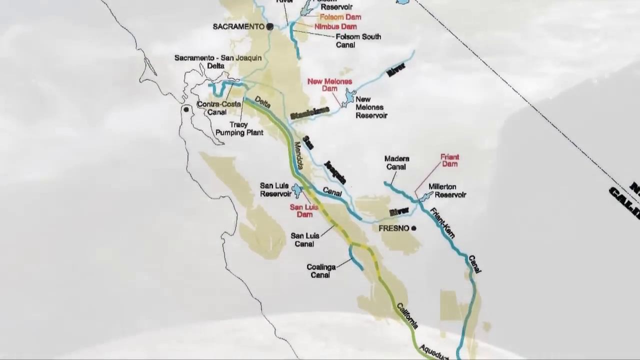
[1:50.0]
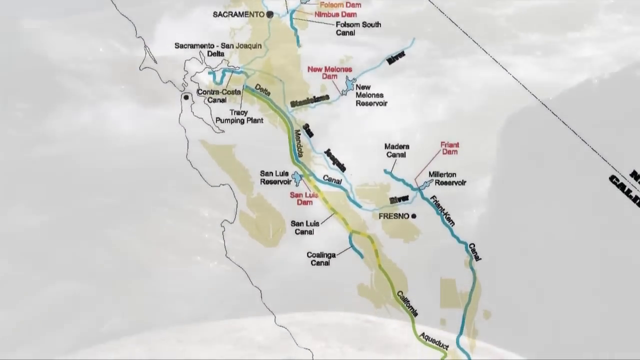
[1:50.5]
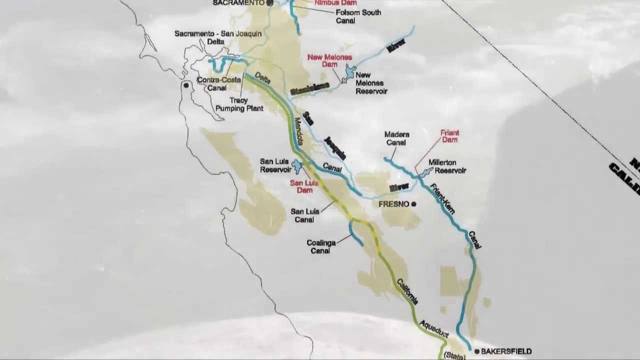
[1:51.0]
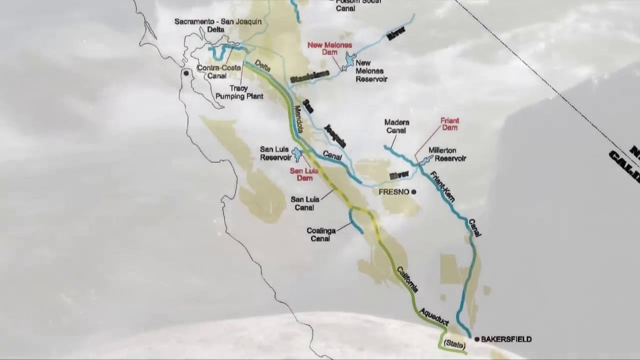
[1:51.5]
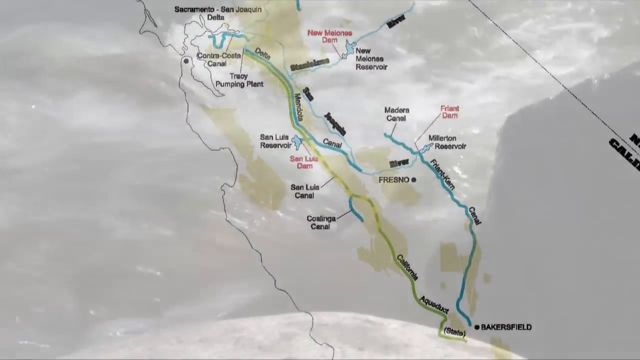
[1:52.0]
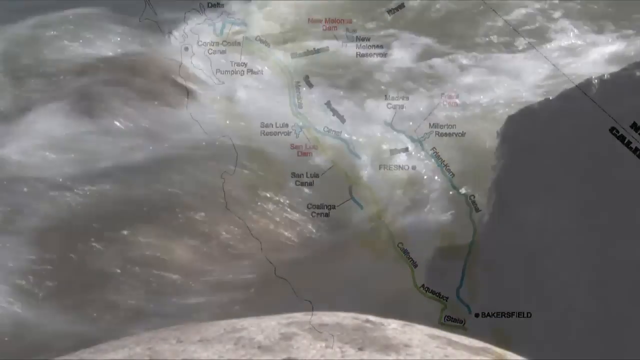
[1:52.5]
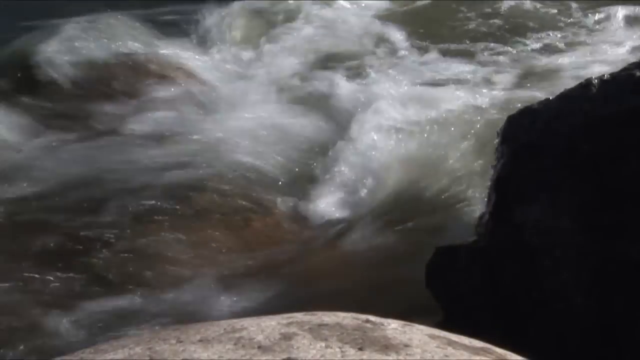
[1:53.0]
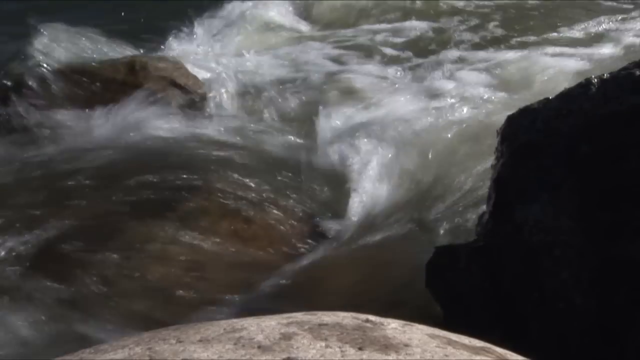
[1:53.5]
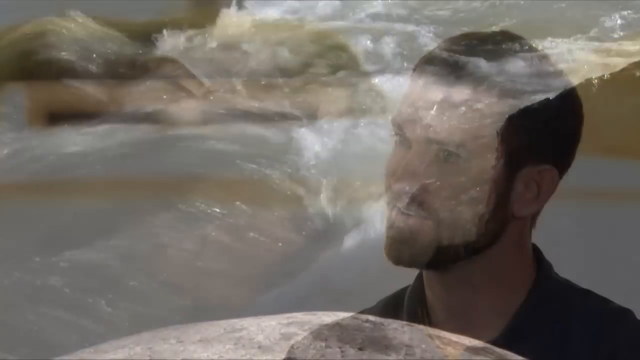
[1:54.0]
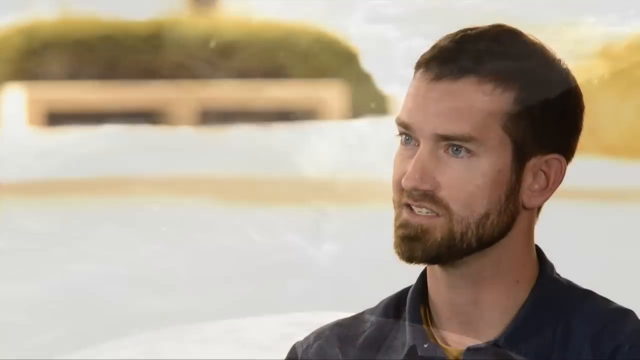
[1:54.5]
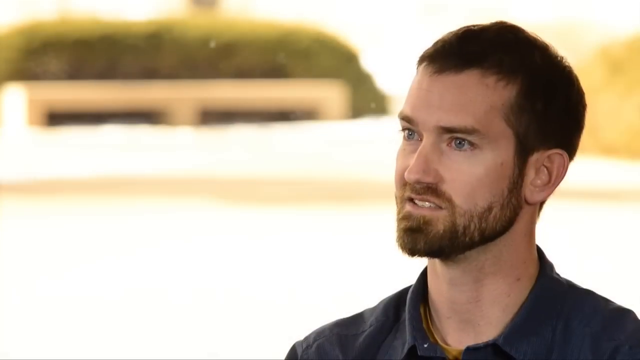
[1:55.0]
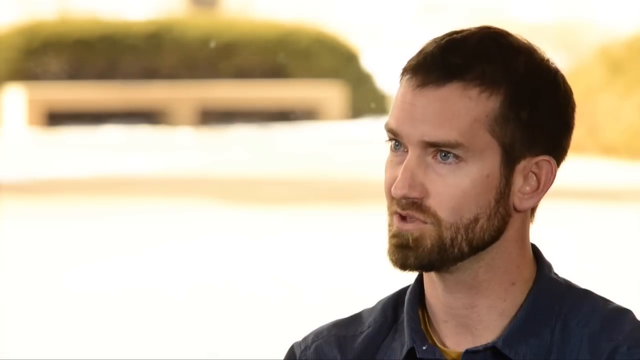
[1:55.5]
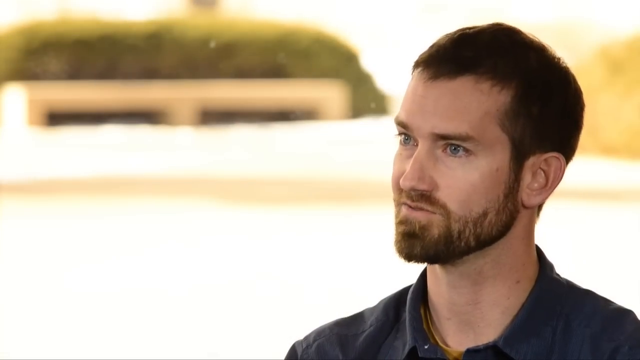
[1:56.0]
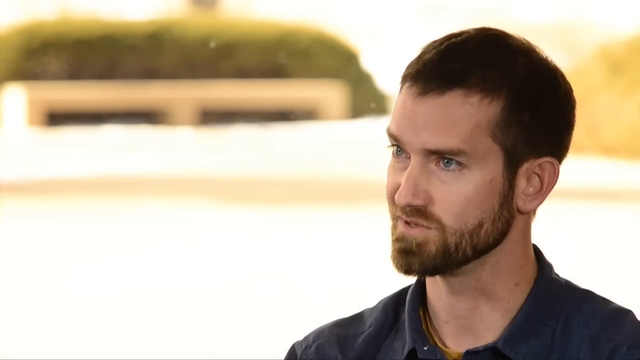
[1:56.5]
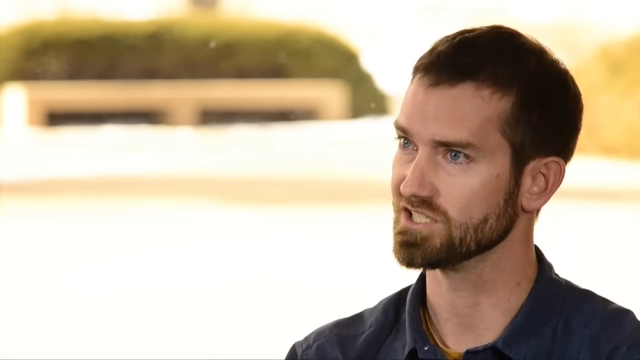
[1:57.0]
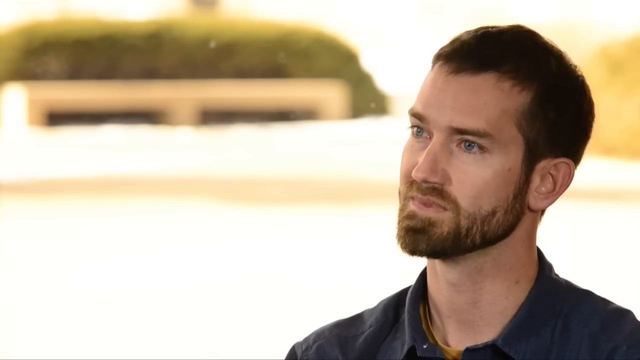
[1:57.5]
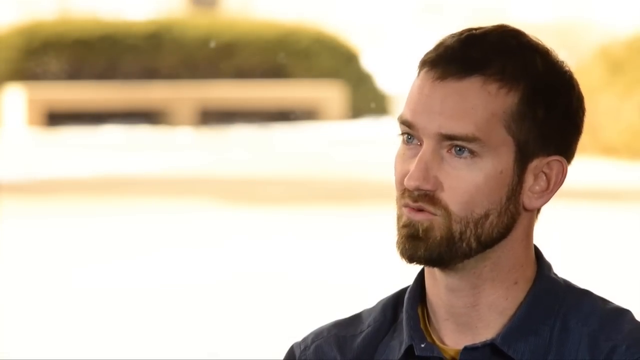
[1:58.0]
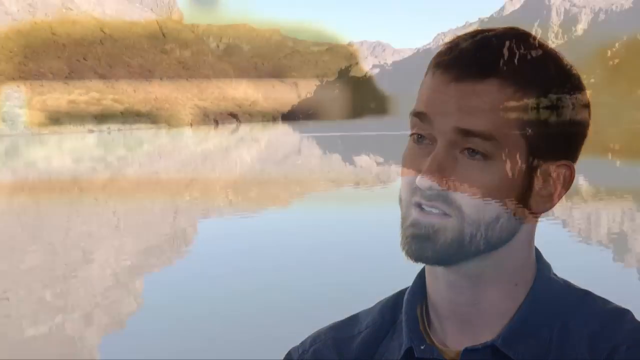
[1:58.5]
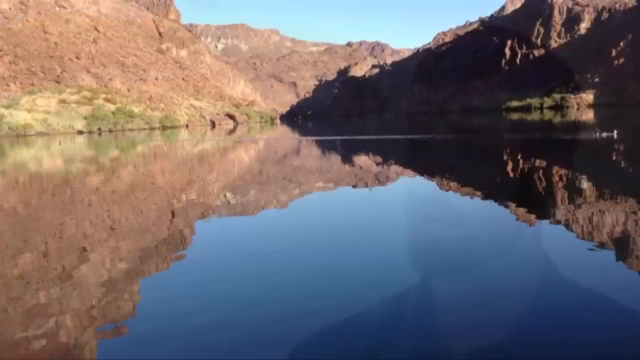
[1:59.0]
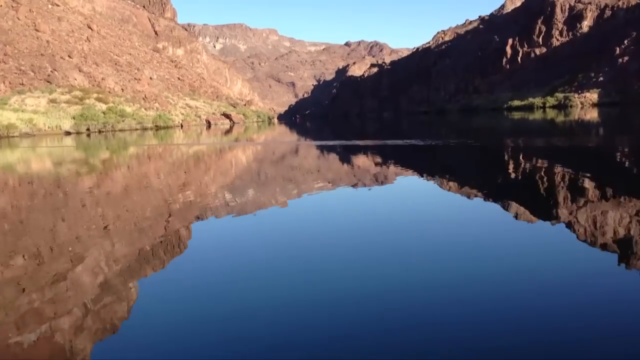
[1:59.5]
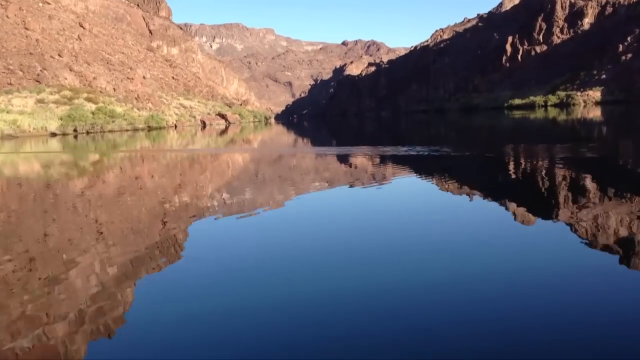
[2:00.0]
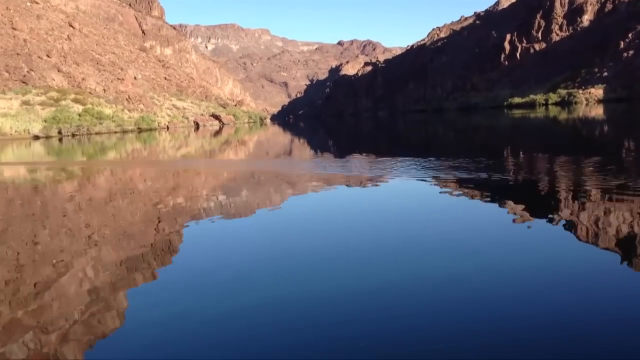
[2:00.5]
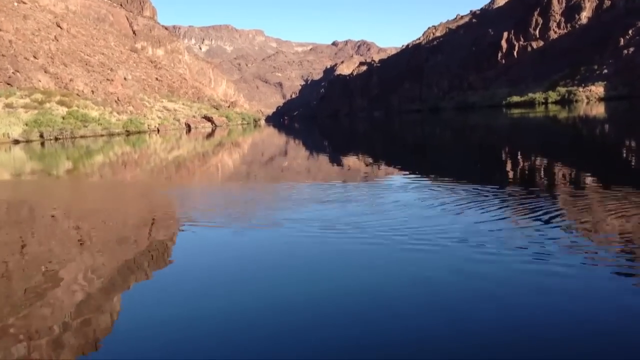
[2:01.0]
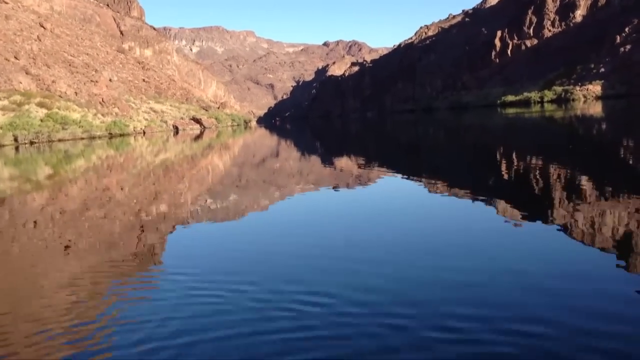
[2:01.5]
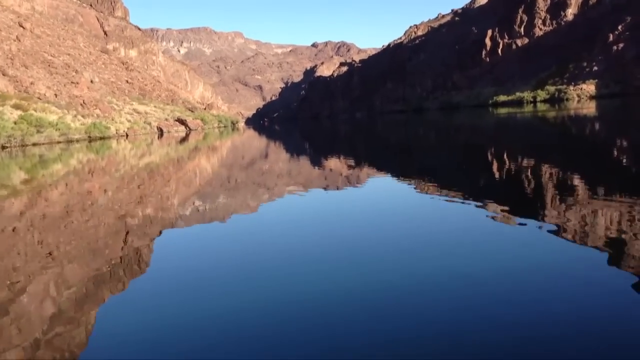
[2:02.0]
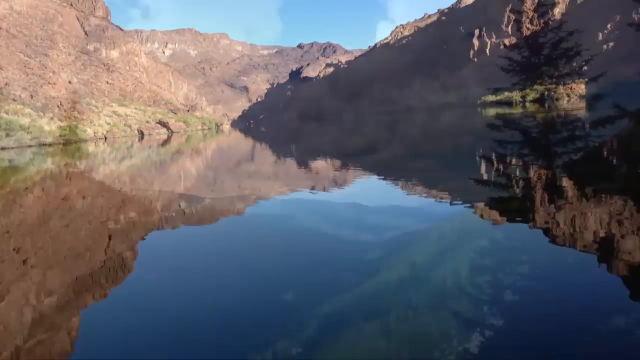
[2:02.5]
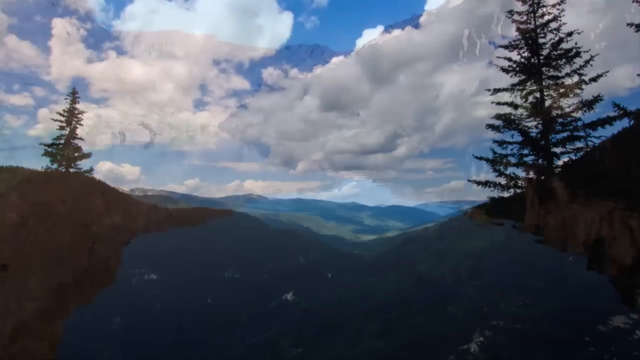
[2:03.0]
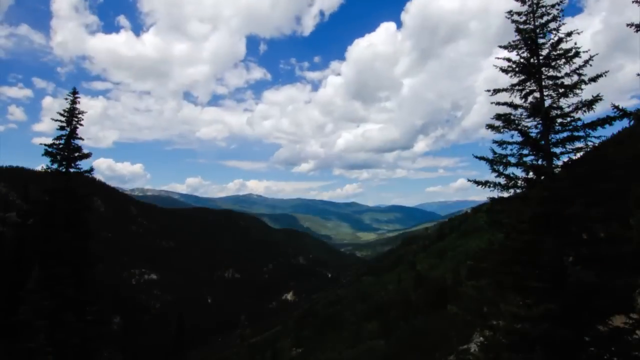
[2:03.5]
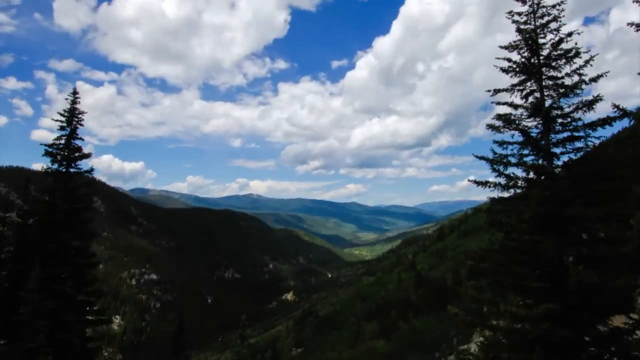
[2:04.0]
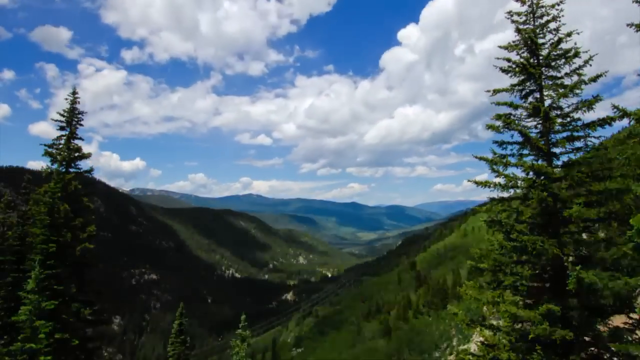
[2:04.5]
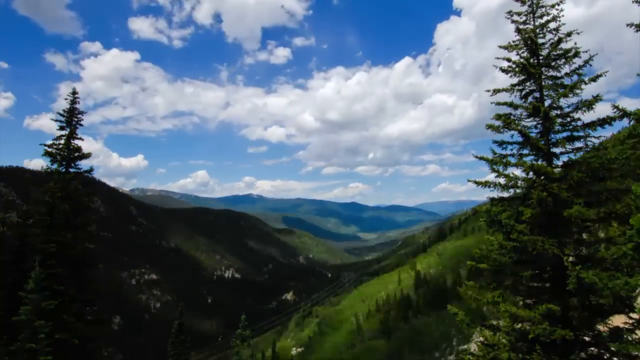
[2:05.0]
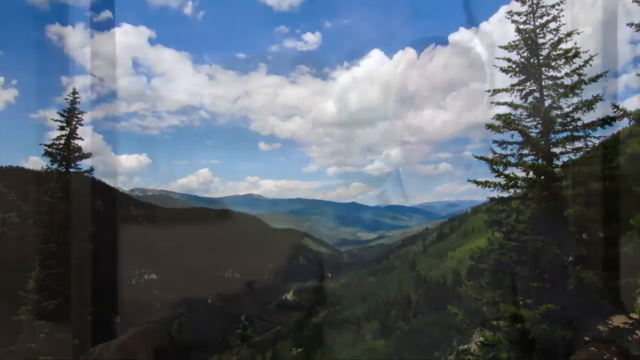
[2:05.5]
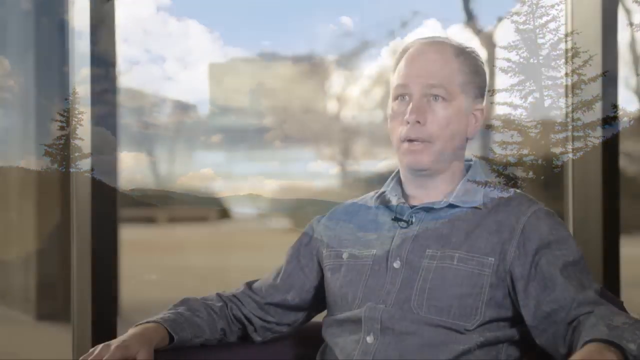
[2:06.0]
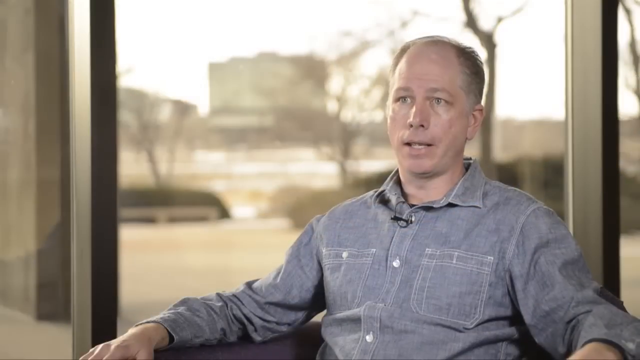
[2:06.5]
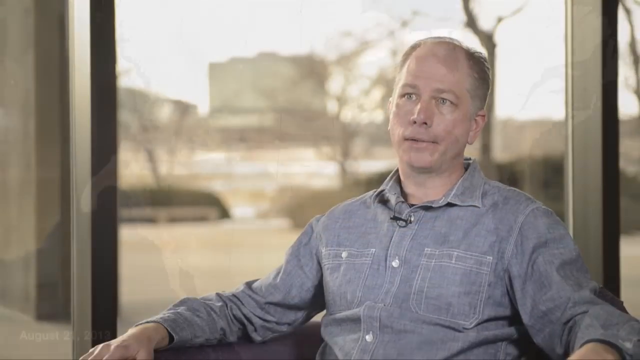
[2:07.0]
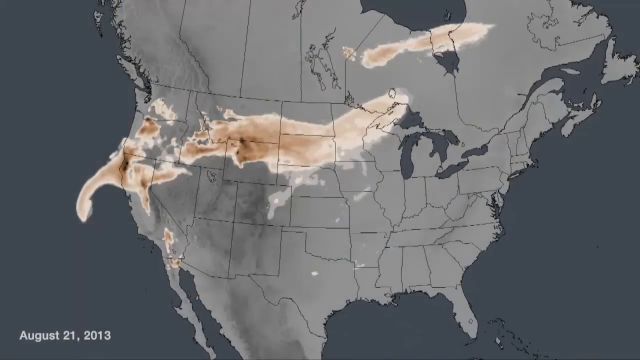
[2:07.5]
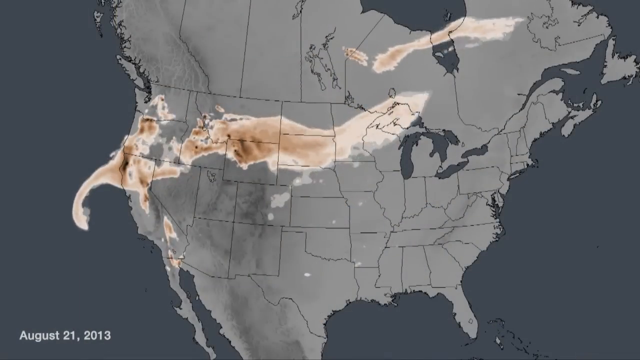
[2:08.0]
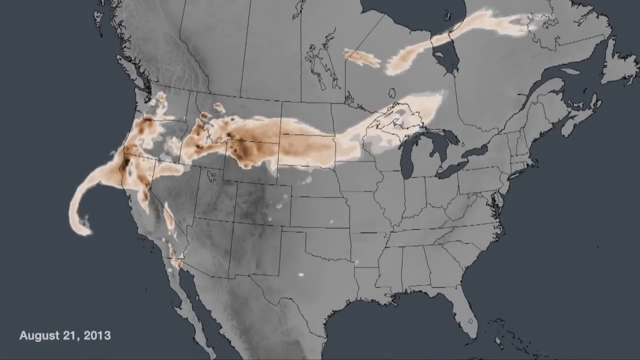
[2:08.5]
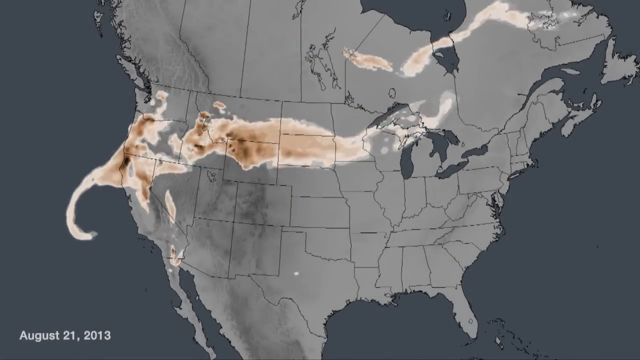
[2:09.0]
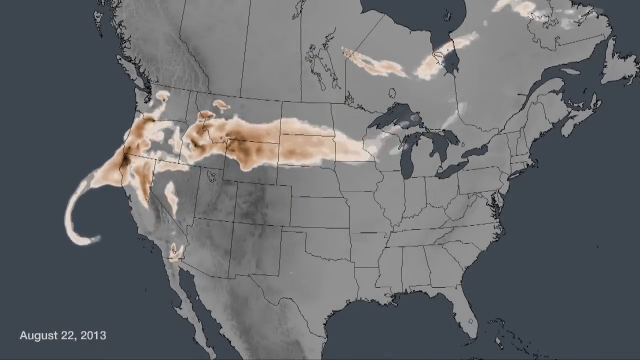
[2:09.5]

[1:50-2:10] Graphics show a map of the San Joaquin Delta in Sacramento, seemingly with the river going from the left-hand side of the screen down across to the right-hand side. Writing on the map names places such as Fresno. Water then rushes down through a river. The video returns to a man being interviewed and talking to somebody off-screen; he has short black hair and a dark moustache and beard, and he nods his head as he talks. The camera then pans down a calm river with no rapids, flanked on either side by high brown cliffs with not much vegetation. Next comes a countryside landscape with a lot of pine trees, green grass and foliage. Then a map of North America appears, and a white, slightly balding man in a light blue shirt talks to a camera.